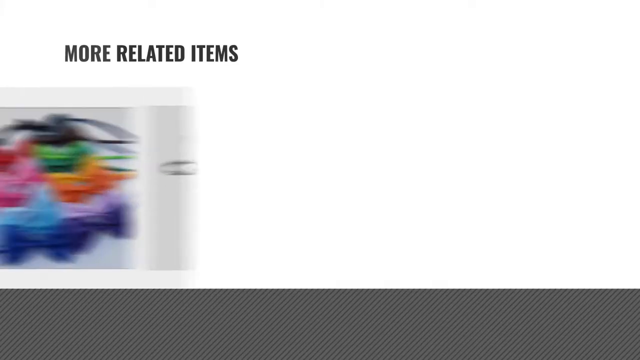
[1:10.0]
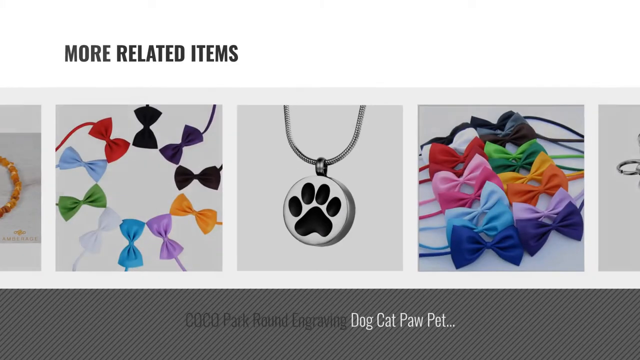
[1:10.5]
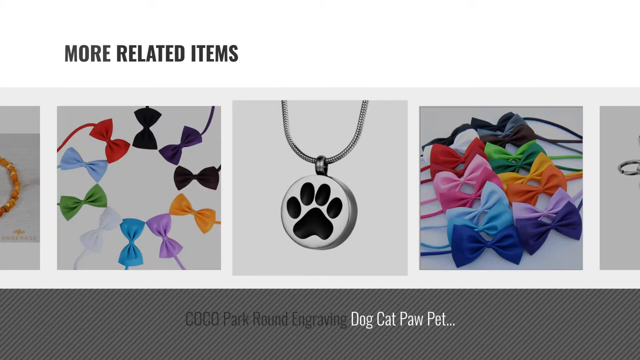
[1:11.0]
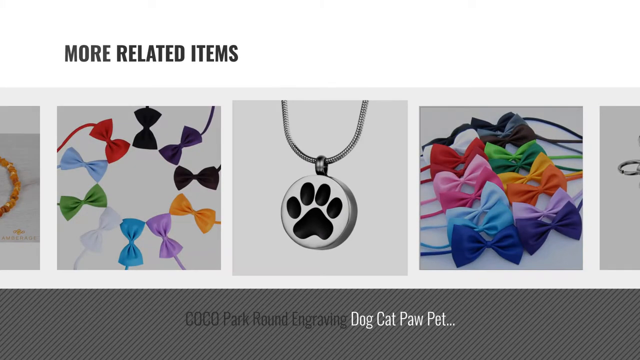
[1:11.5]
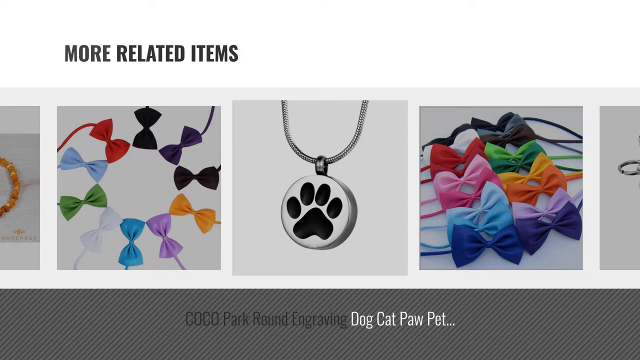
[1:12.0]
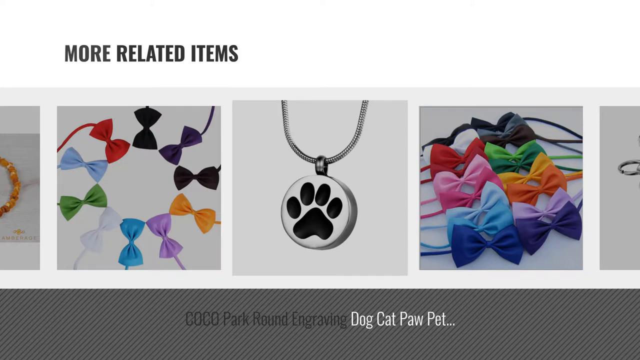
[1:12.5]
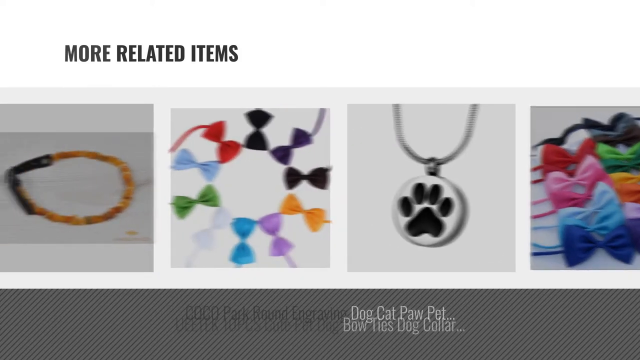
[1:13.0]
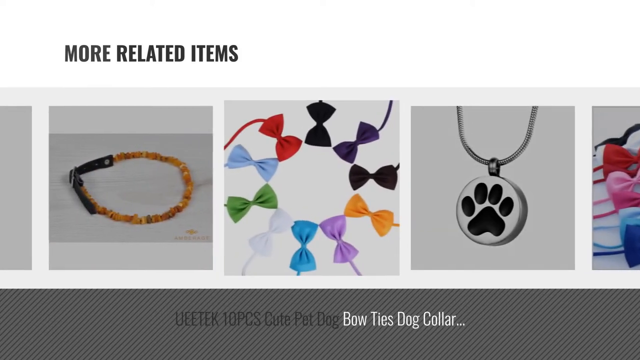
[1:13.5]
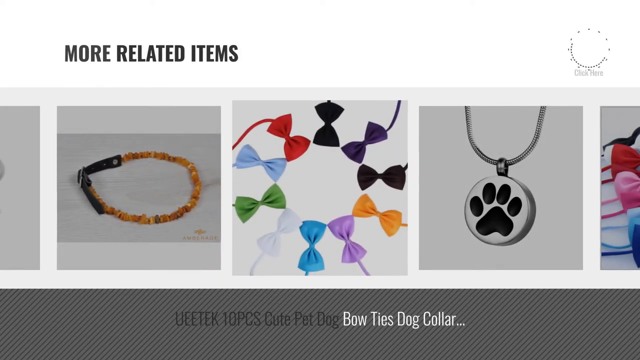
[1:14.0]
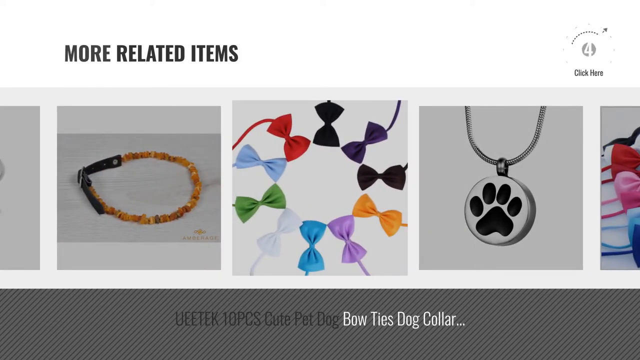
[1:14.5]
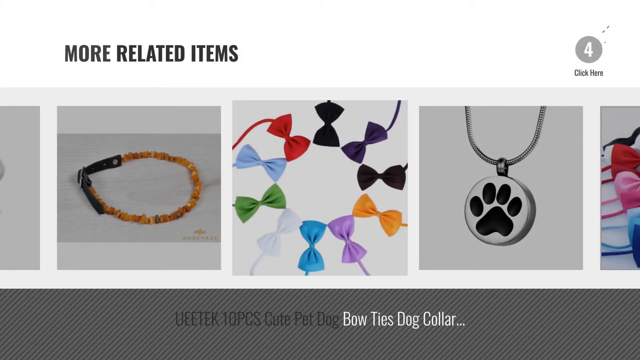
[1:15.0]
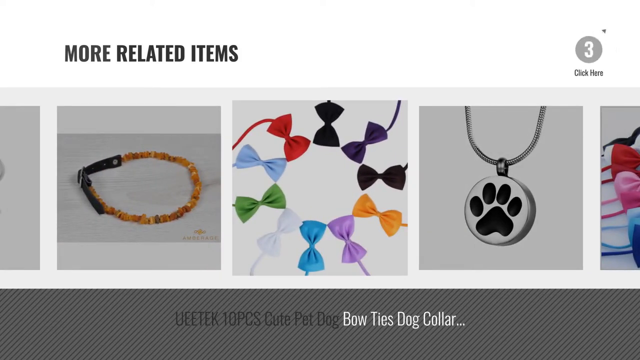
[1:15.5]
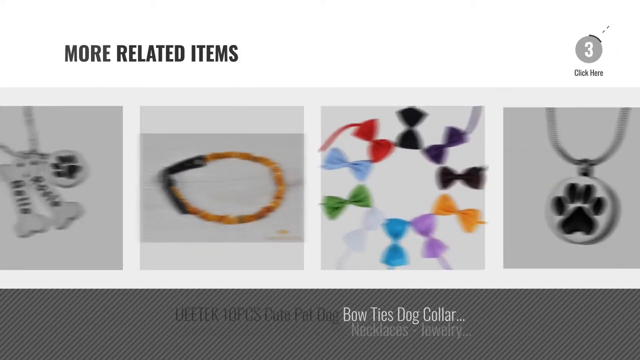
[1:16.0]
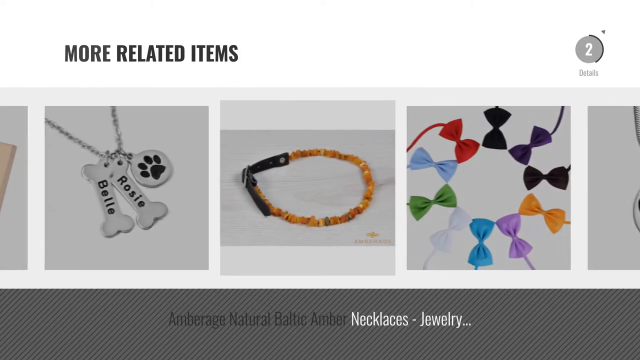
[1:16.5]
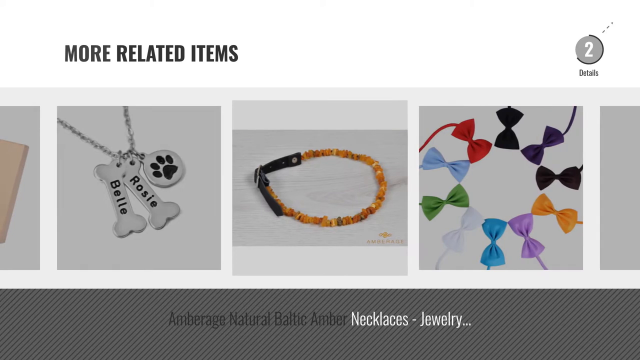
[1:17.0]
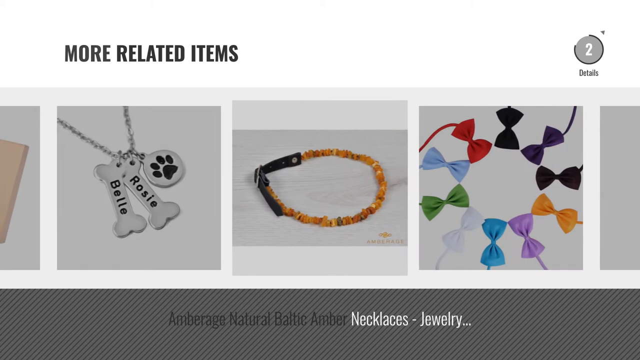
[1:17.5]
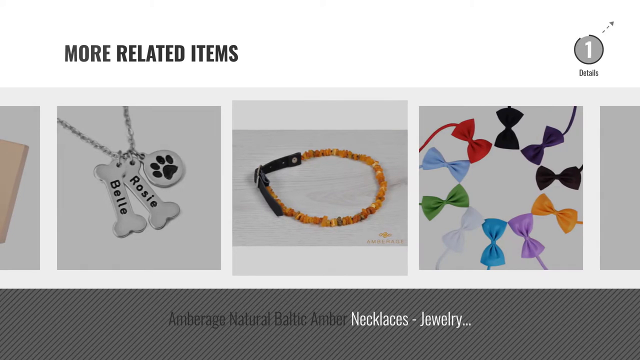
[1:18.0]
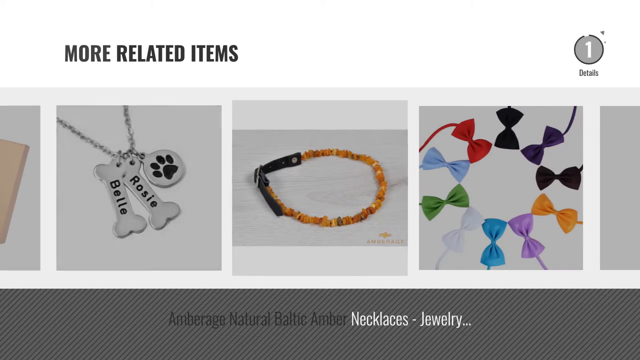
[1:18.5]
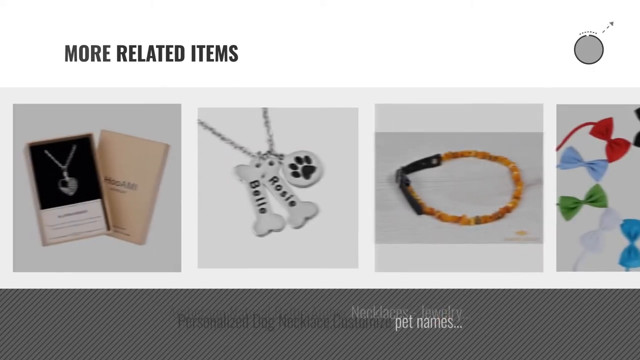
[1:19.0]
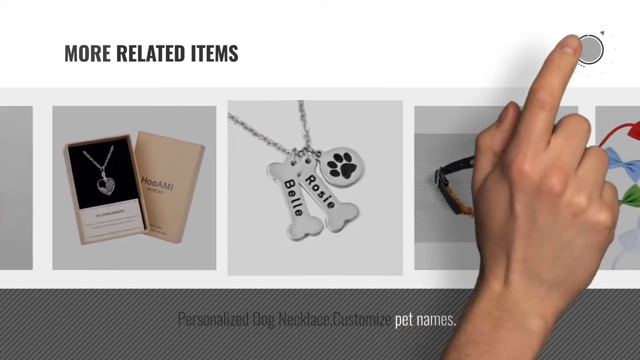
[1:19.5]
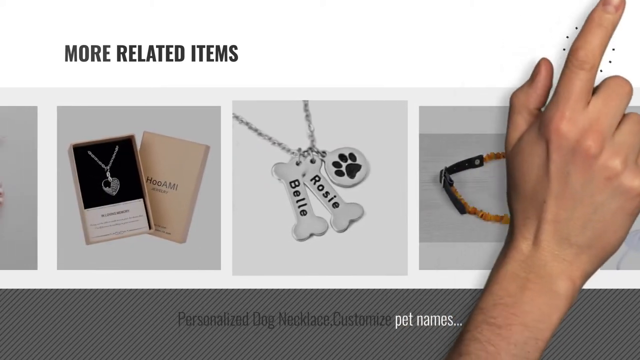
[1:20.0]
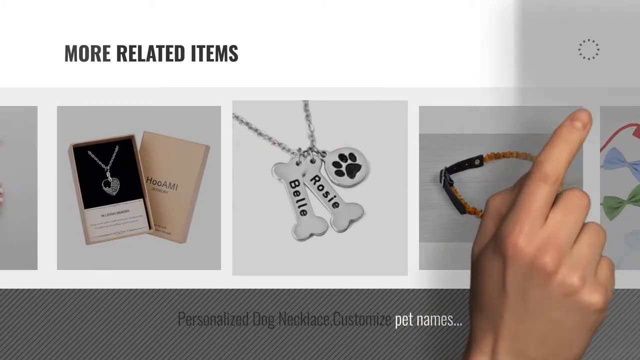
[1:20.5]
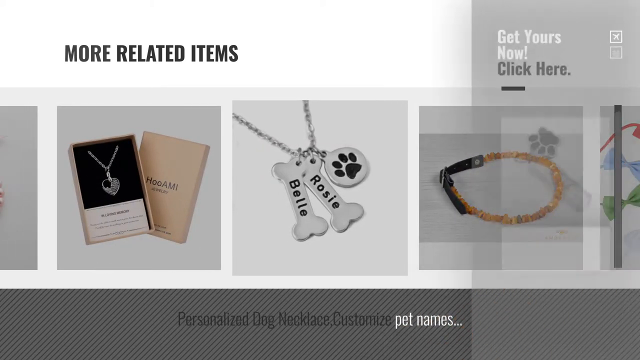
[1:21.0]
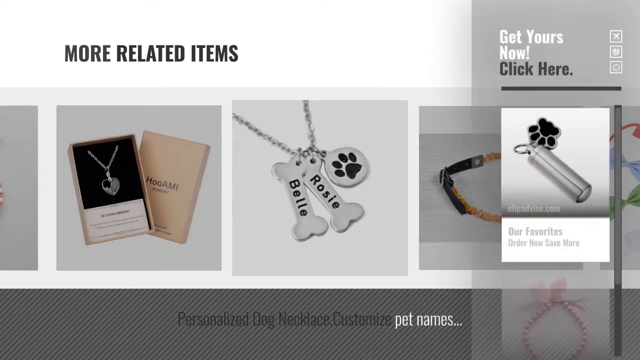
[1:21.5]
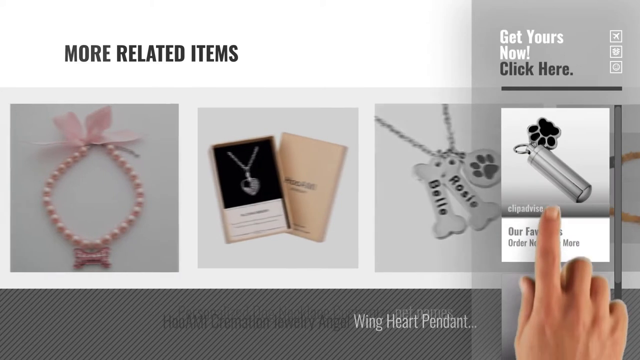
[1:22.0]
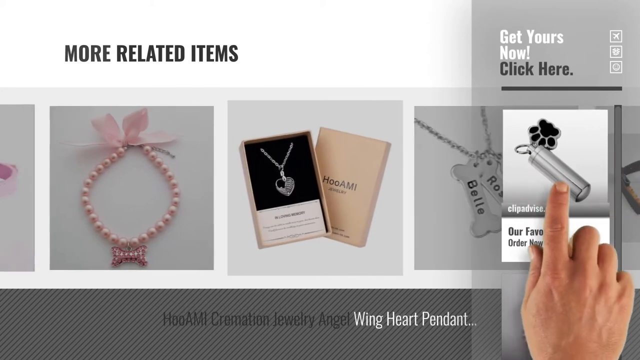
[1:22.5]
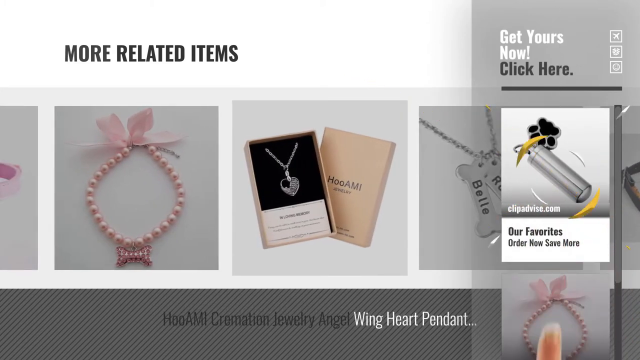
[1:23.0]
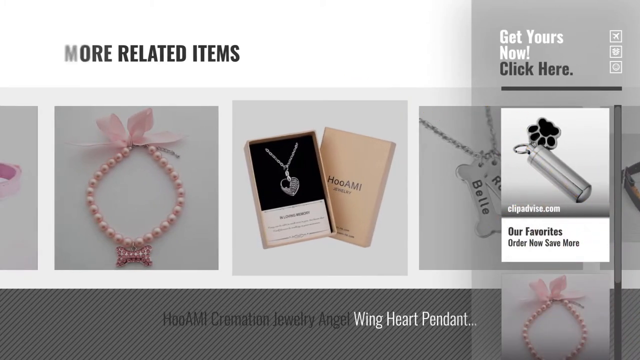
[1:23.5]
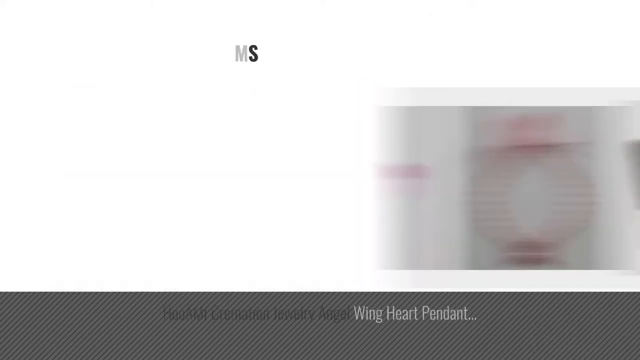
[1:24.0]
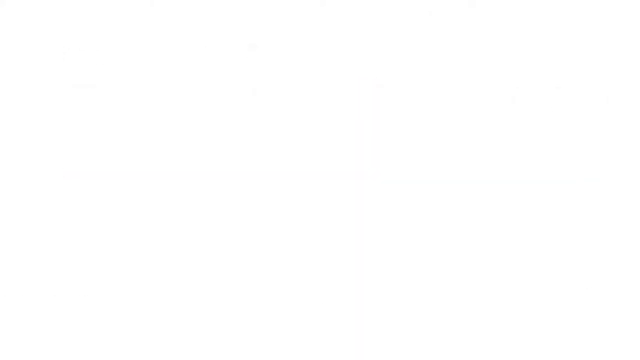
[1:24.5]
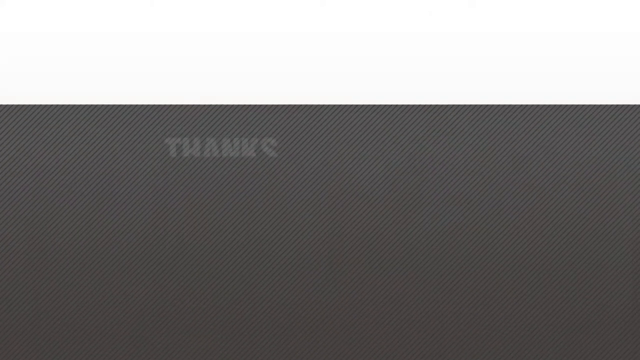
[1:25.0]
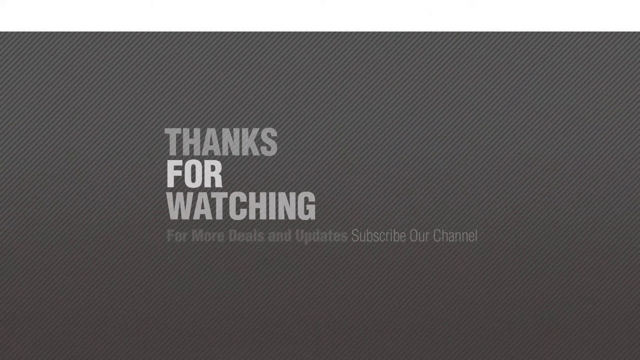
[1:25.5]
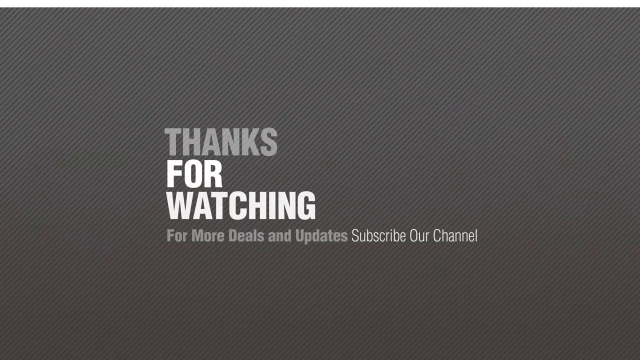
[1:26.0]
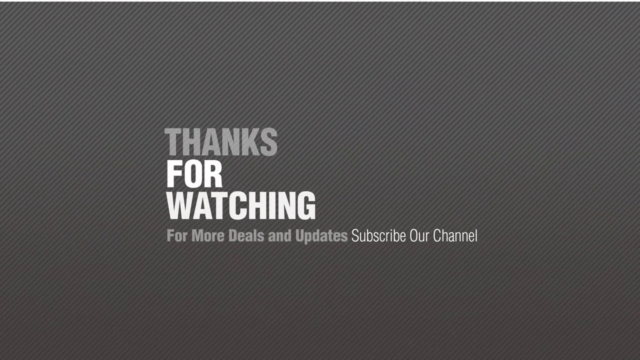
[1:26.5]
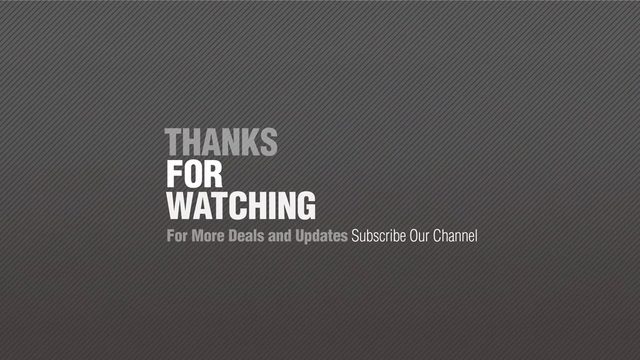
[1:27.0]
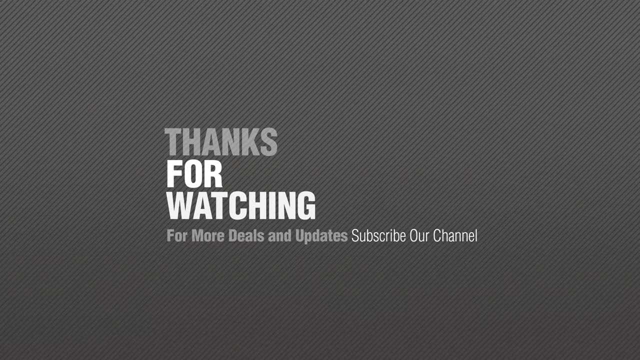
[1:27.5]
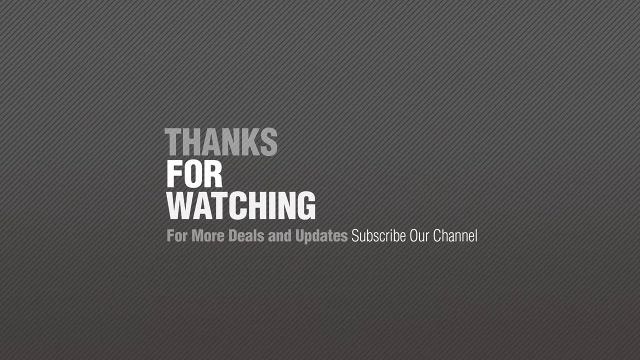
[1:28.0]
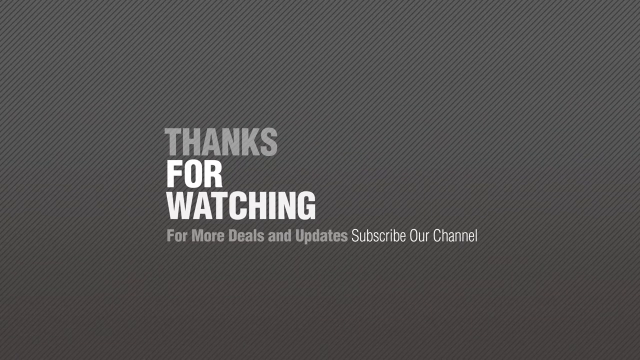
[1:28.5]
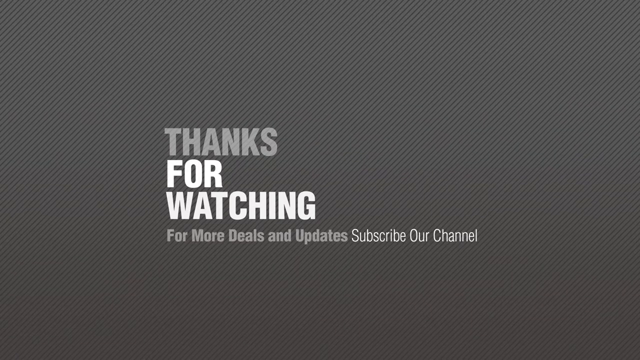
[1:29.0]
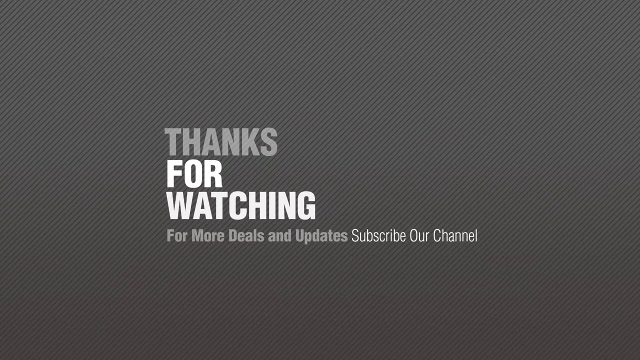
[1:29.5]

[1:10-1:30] Images of different dog collars appear. On the left are a number of bows arranged in a circle, in the centre is a pendant with a dog paw print, and on the right are the same bows as on the left, arranged neatly in two rows. The images scroll from right to left across the screen. Next is an amber necklace collar for a dog with multiple amber beads, clasped at the back with a buckle on black leather. After that comes a pendant with two bone-shaped tags bearing the names Rosie and Belle, followed by an image of a heart-shaped pendant of dog jewellery. A hand reaches onto the screen and taps the amber necklace, then taps the top right of the screen, where it says "Get yours now, click here". A small canister for wearing a dog's cremated ashes around the neck appears; it has a paw print pendant.